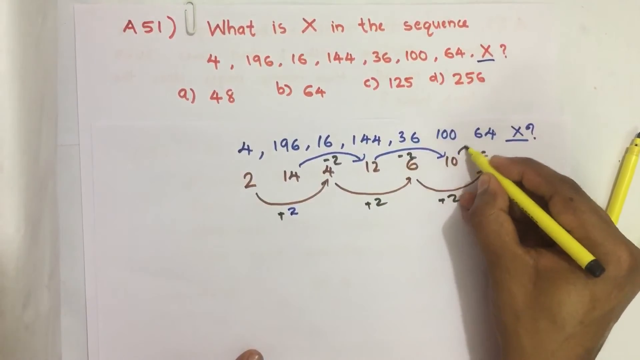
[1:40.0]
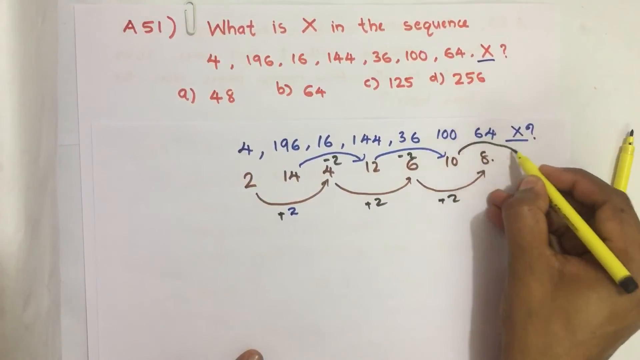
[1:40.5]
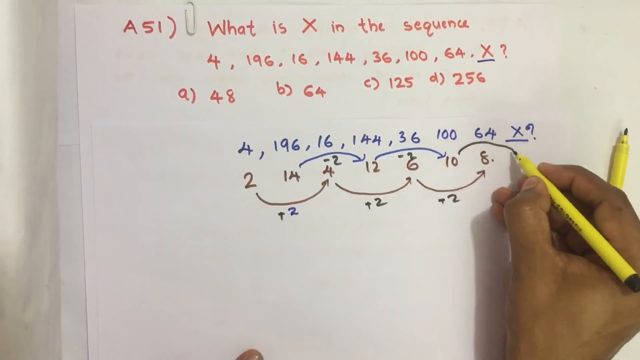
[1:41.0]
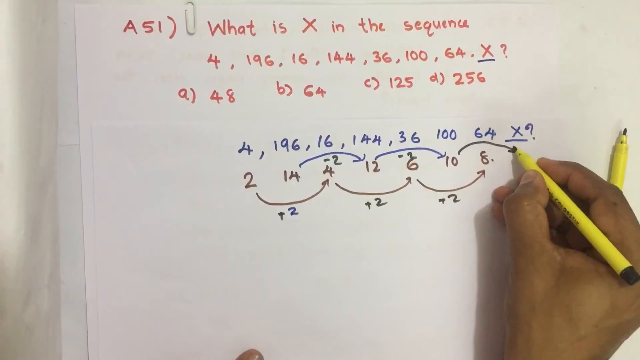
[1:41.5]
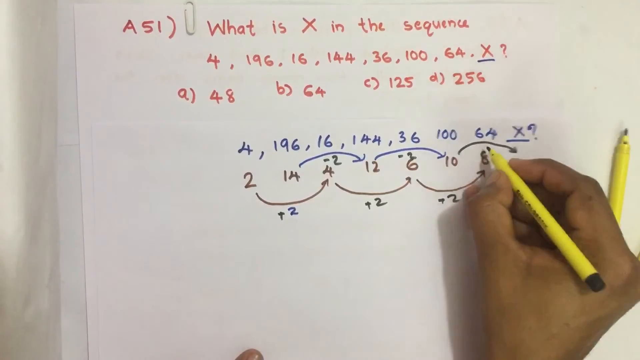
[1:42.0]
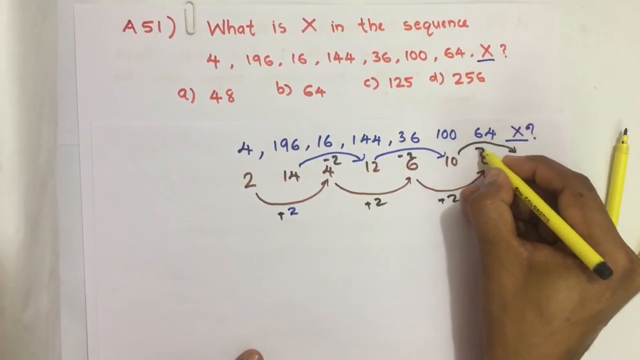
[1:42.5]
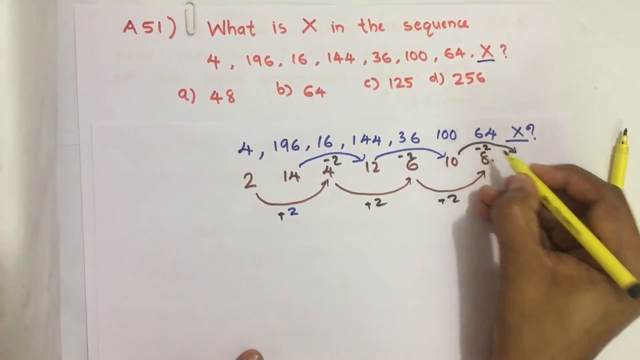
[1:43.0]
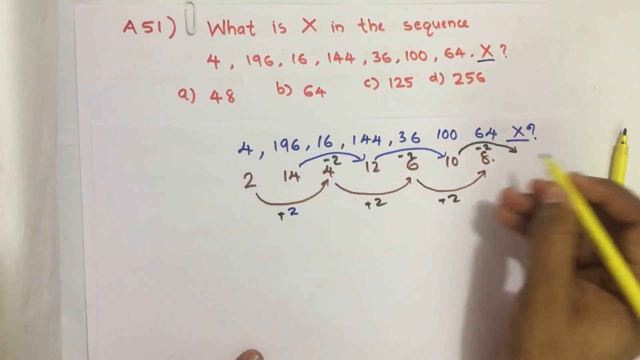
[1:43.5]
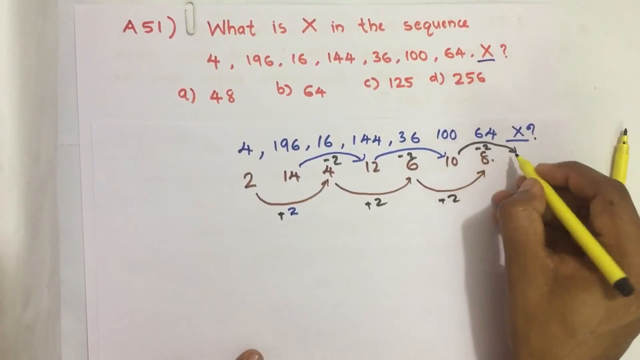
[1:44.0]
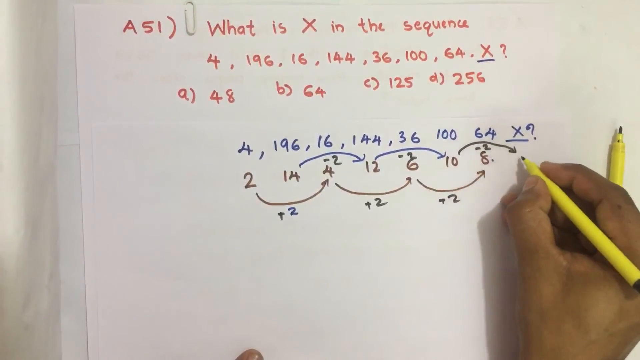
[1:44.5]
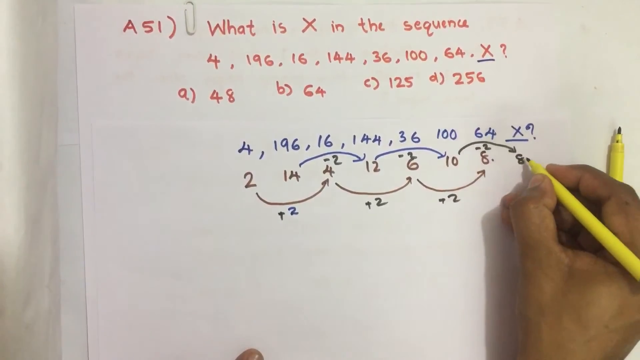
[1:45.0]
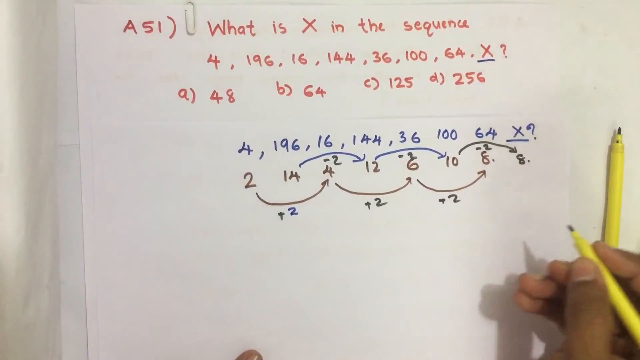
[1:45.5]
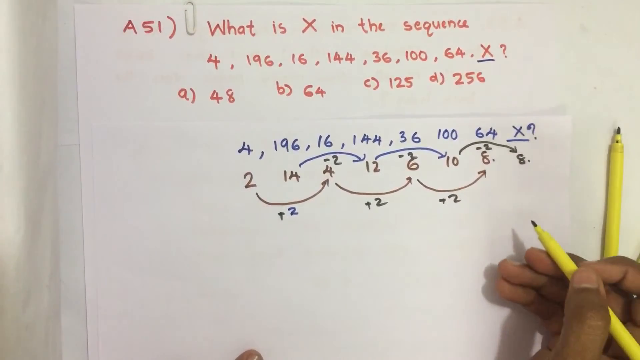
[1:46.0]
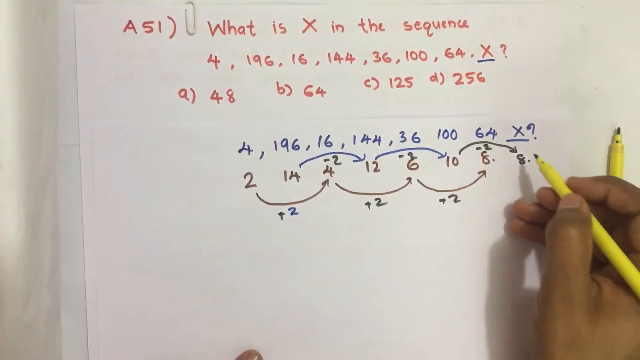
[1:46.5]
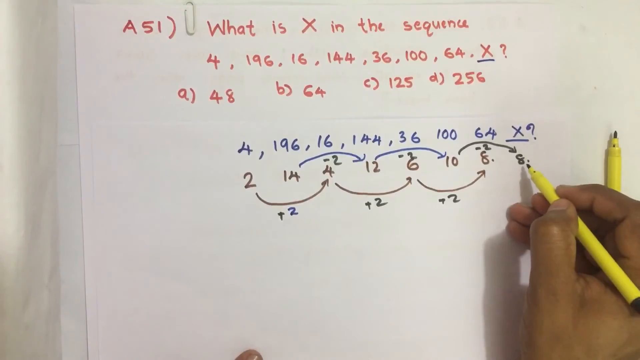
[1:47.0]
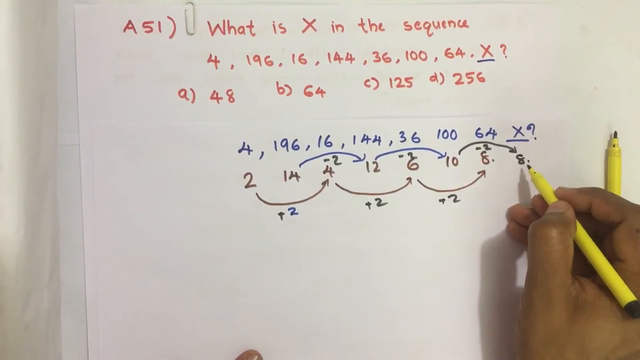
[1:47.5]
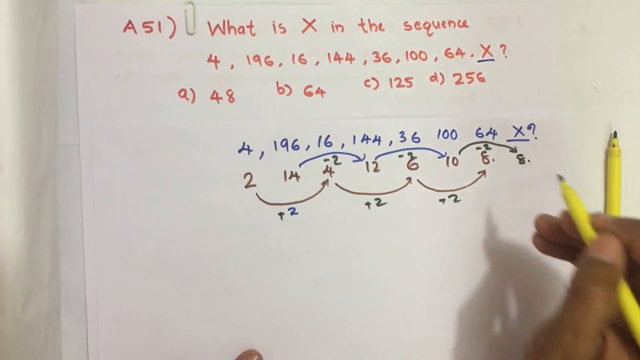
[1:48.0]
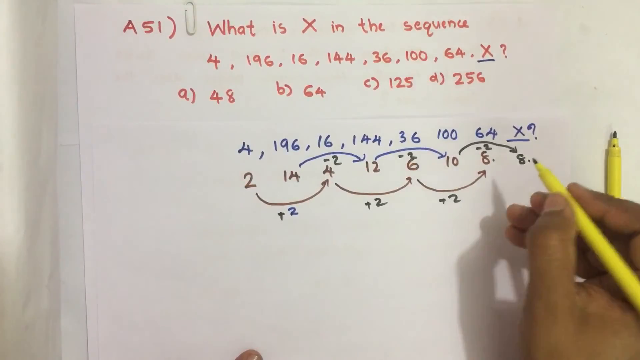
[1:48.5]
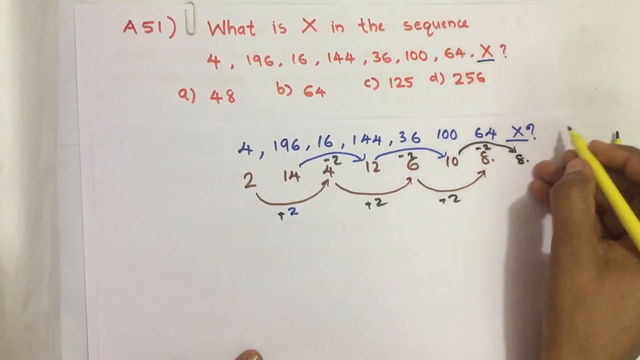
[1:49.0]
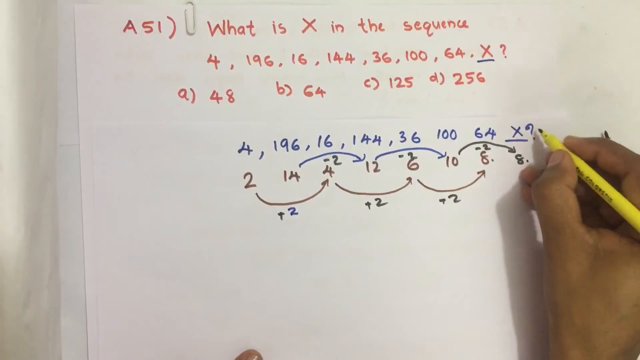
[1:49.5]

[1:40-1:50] The white piece of paper shows the problem in red, the paper clip at the top, the rewritten sequence, and the pattern of plus two and minus two for alternating numbers. The person draws an arrow and works out that ten minus two is eight, apparently indicating that the missing number above is 64, since 8 times 8 is 64.